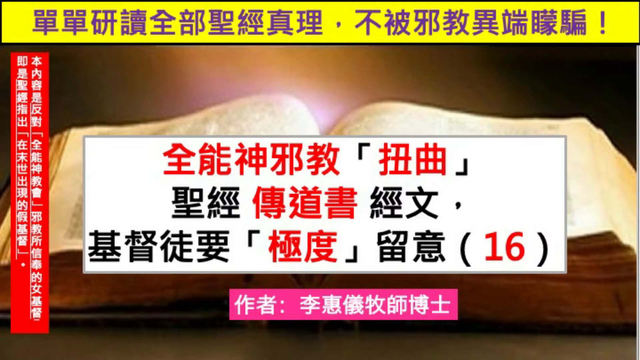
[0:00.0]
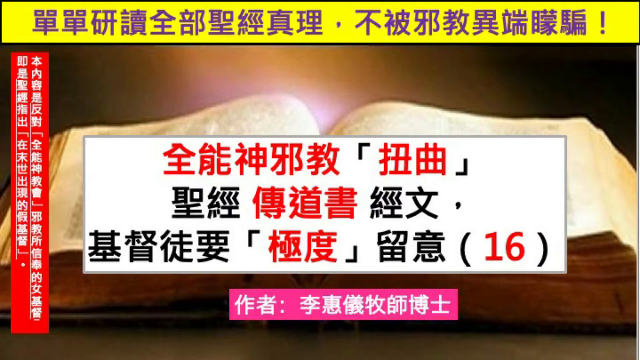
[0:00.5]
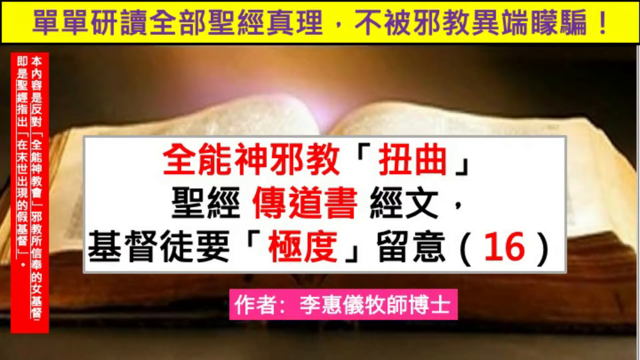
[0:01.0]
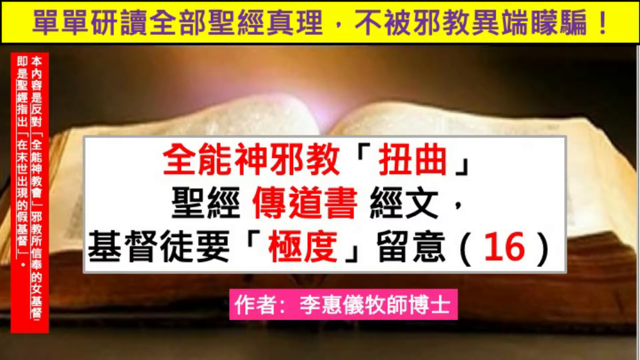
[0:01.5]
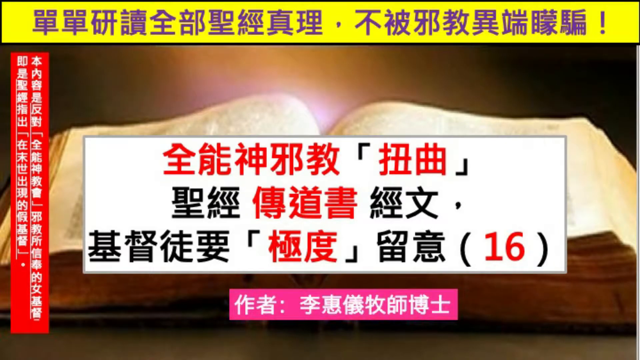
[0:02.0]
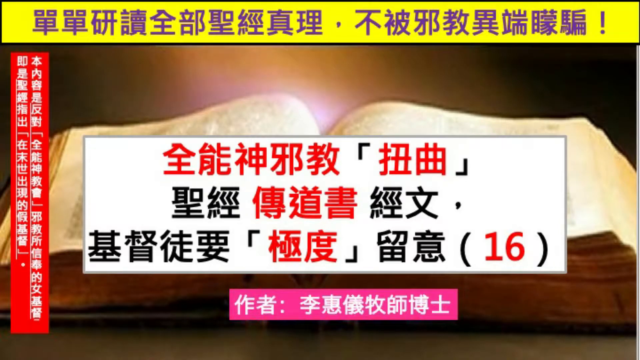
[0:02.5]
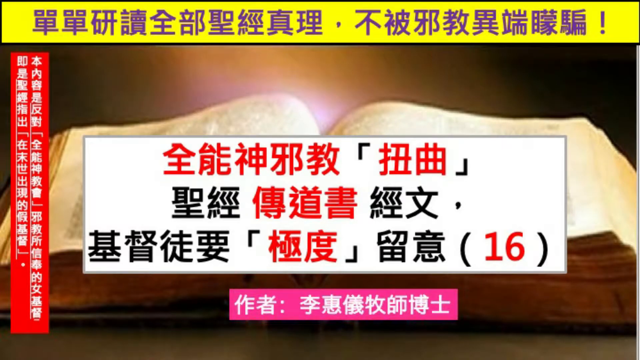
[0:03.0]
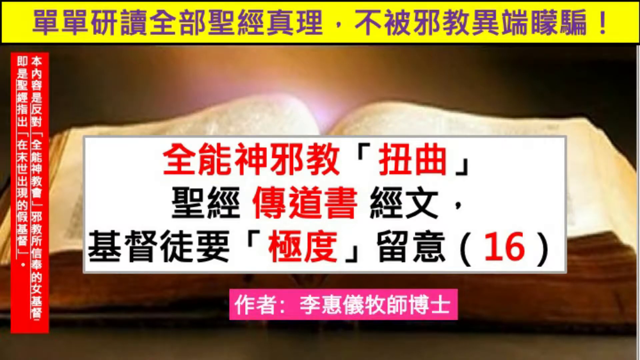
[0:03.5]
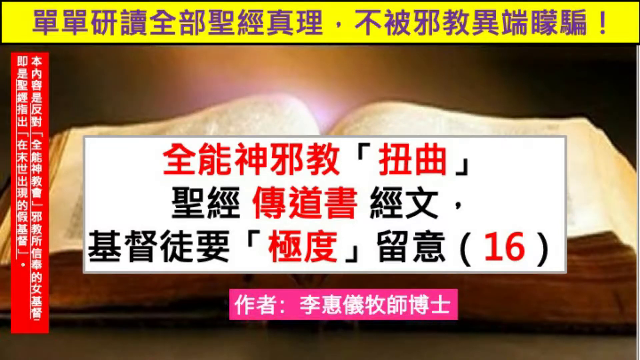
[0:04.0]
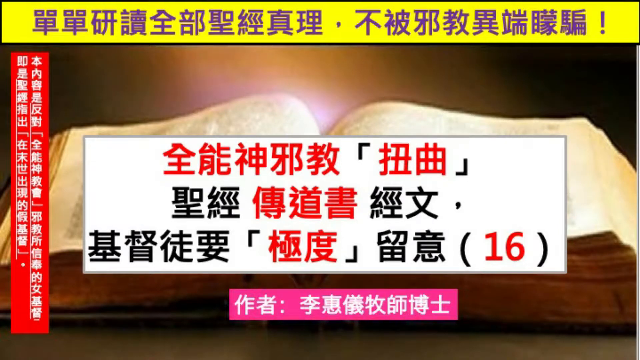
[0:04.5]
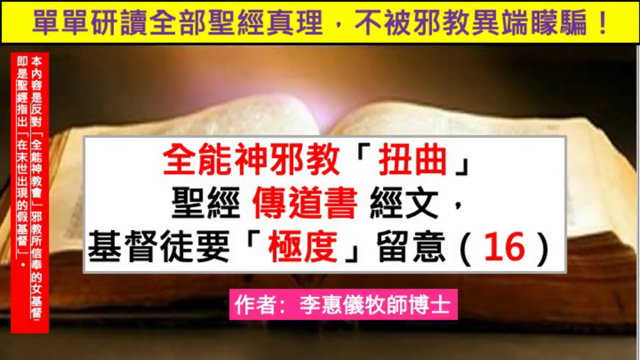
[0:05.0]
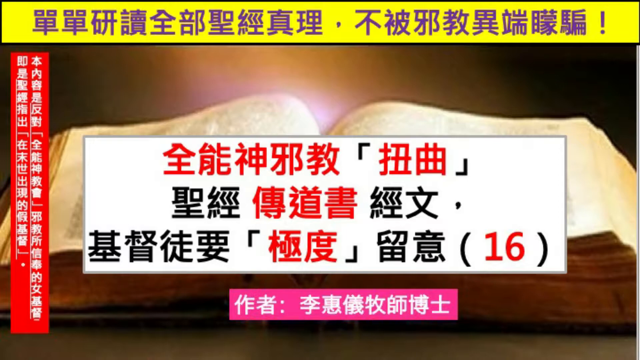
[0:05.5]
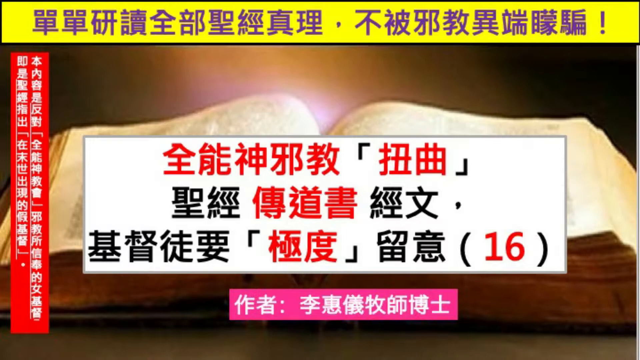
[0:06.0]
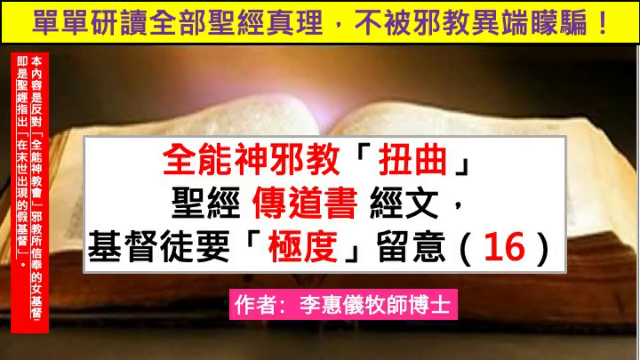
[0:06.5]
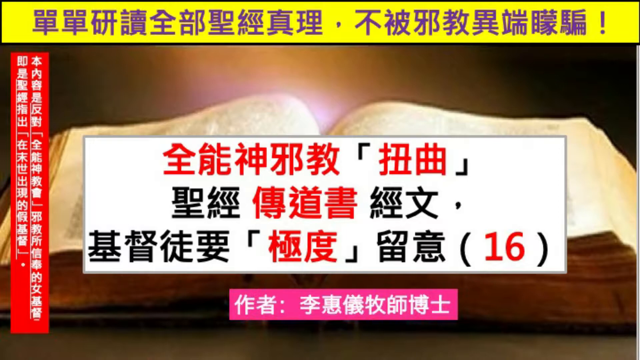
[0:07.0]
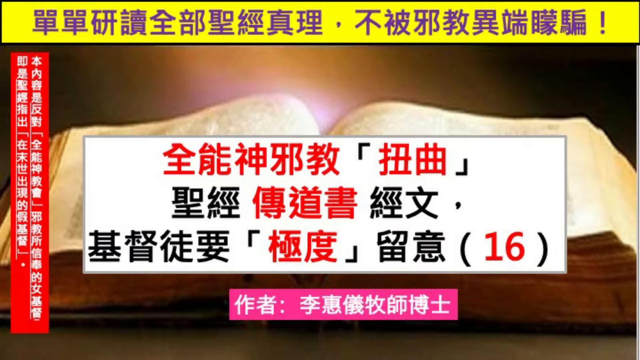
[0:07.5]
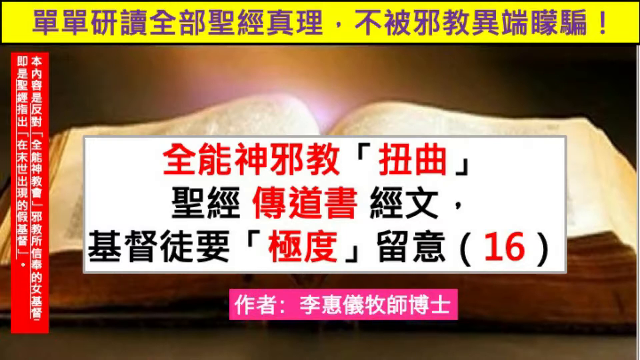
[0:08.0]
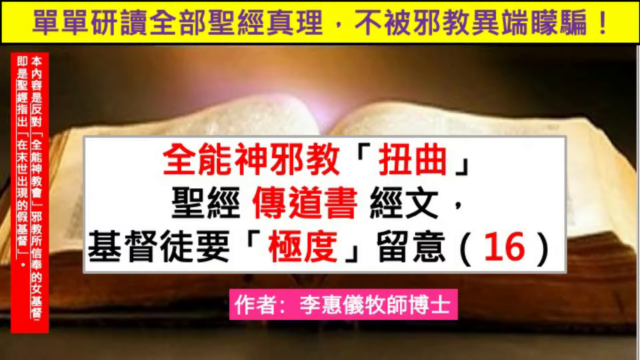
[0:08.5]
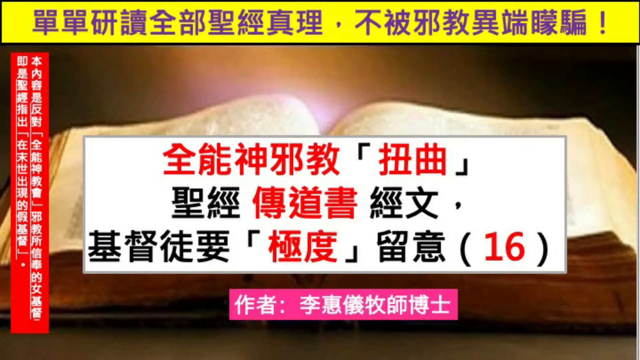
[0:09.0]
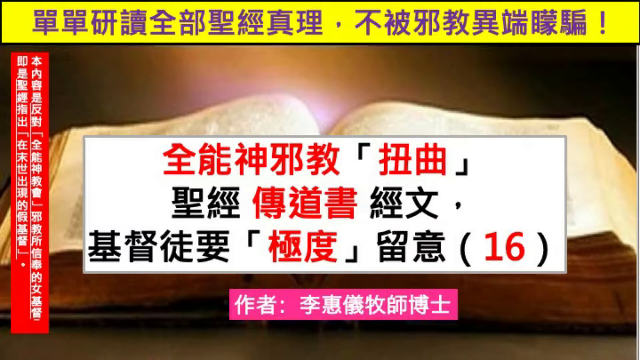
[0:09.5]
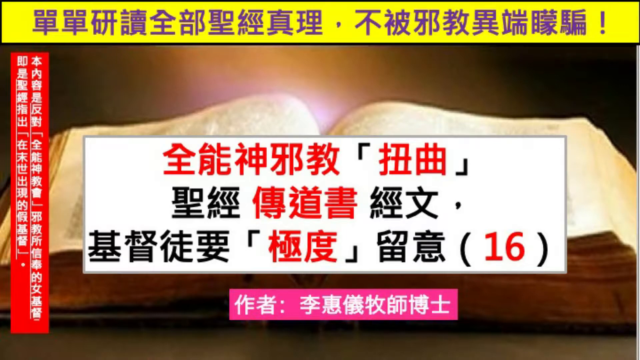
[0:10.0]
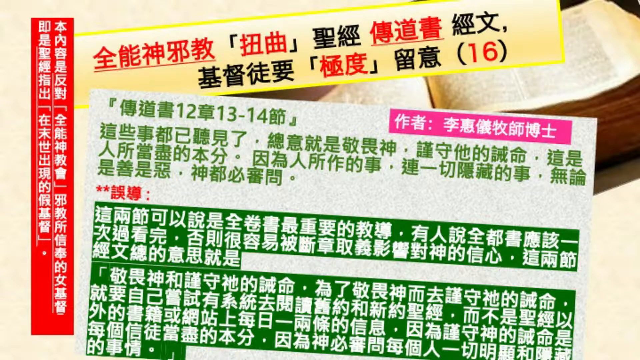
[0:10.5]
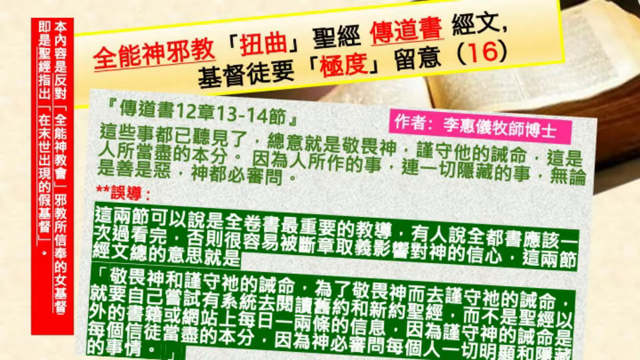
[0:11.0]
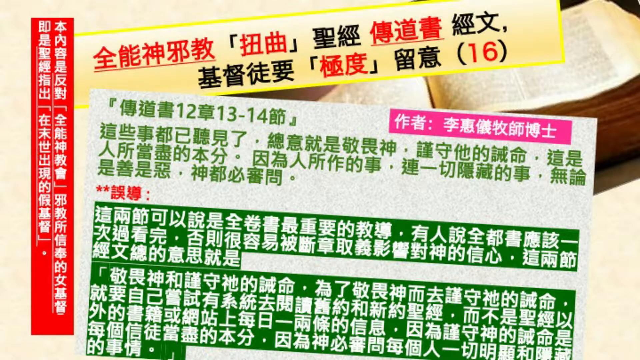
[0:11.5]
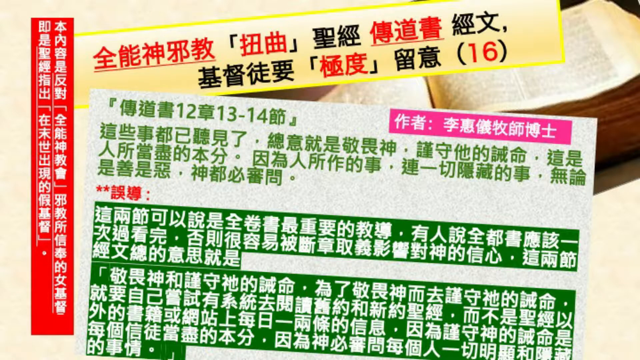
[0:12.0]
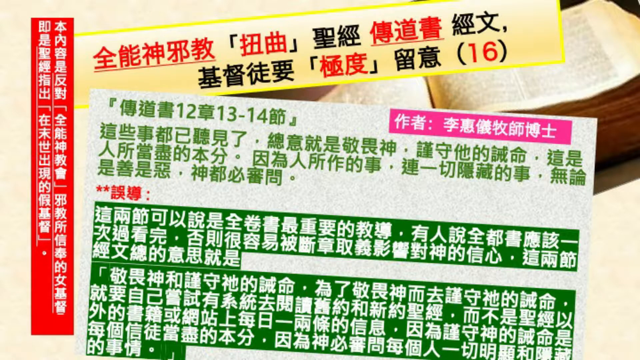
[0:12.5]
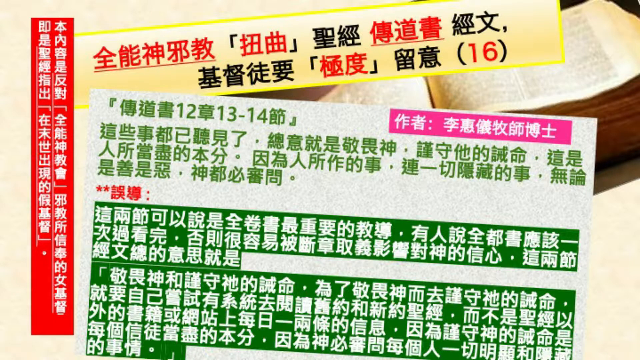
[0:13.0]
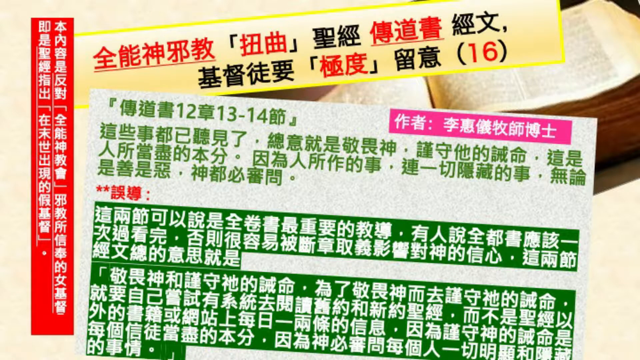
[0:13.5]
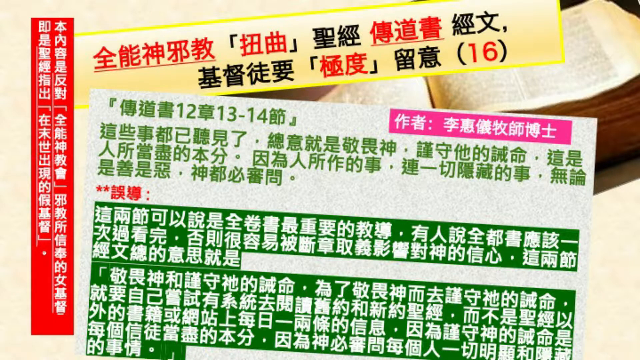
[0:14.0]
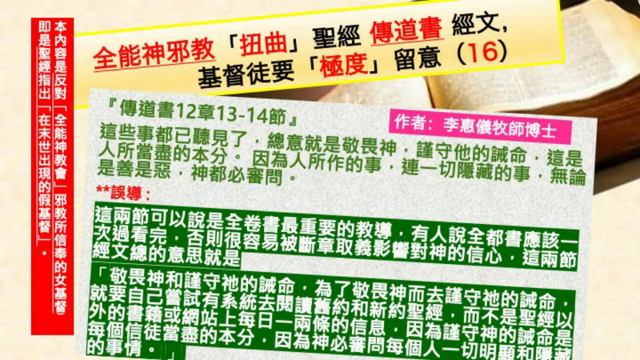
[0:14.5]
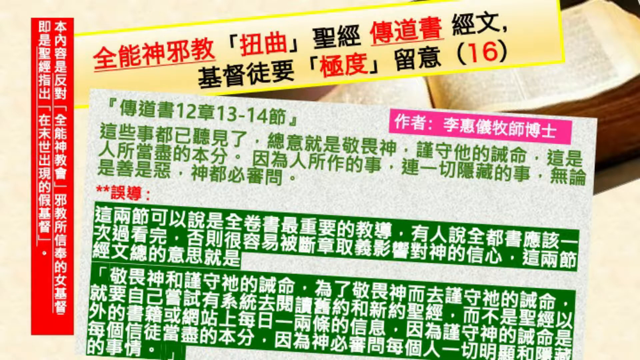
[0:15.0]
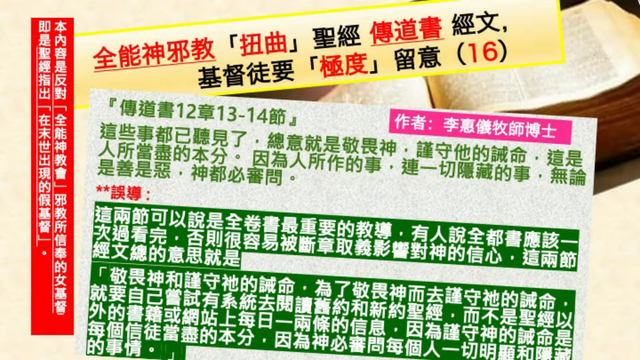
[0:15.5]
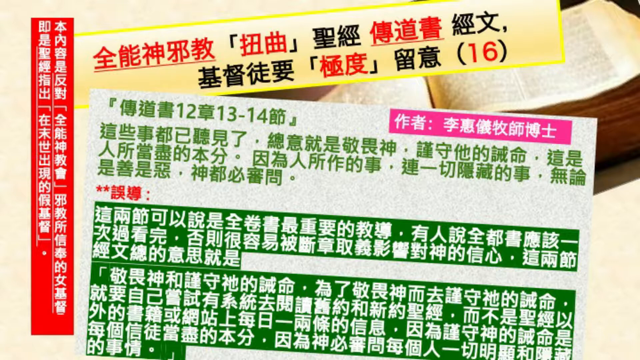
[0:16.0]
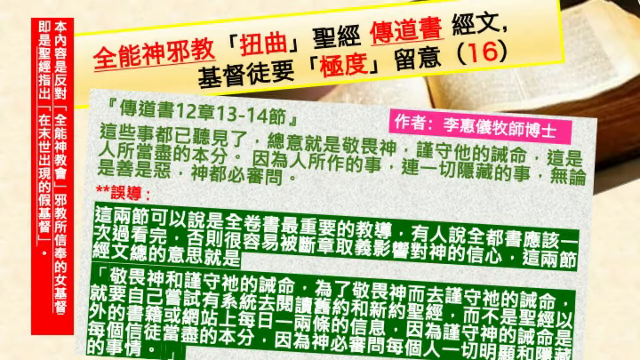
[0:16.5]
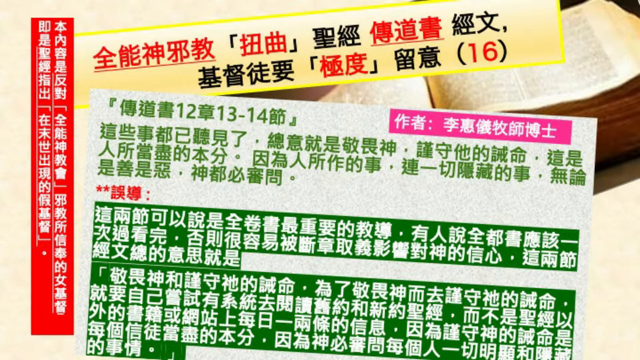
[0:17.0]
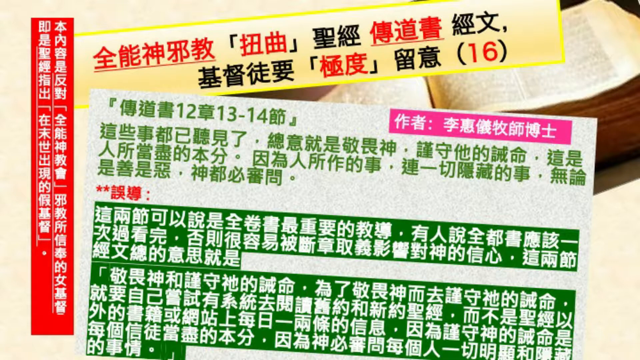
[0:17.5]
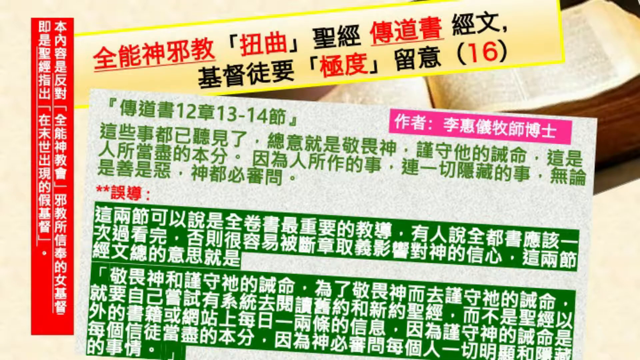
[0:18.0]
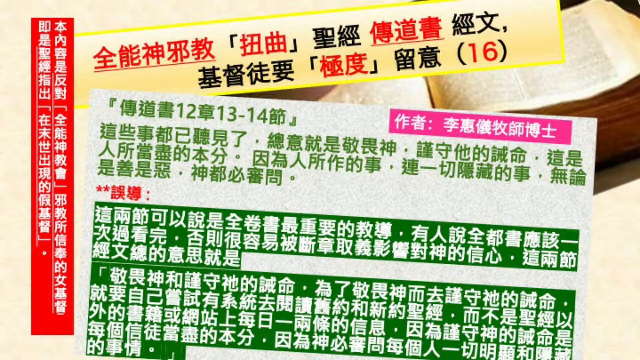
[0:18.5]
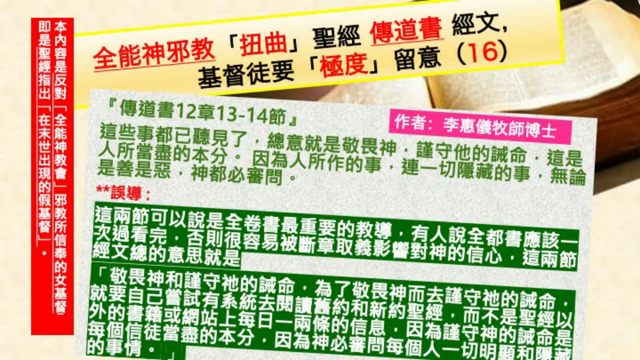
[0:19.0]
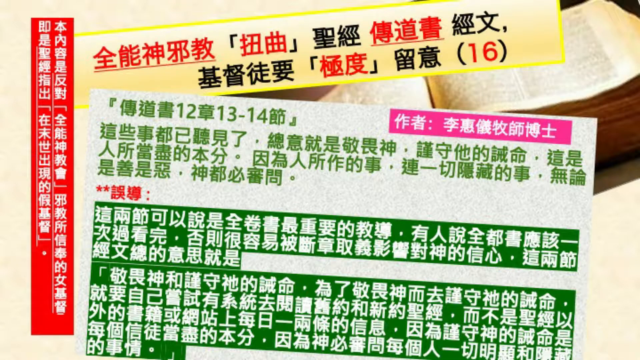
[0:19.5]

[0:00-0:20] Against a dark background, a white book is shown with Asian lettering in red. Another page follows with more Asian lettering, the number 16 in parentheses, a book behind it, and green writing. The first image with the book and the 16 returns; at the bottom is a pink square with more Asian writing, and two red banners with white lettering run down the page. The book is open in the middle and, judging by its size, looks like it could be a Bible. A white rectangular box holds red and black lettering, and the number 16 appears in red with black parentheses around it. The background is dark but white in the middle.